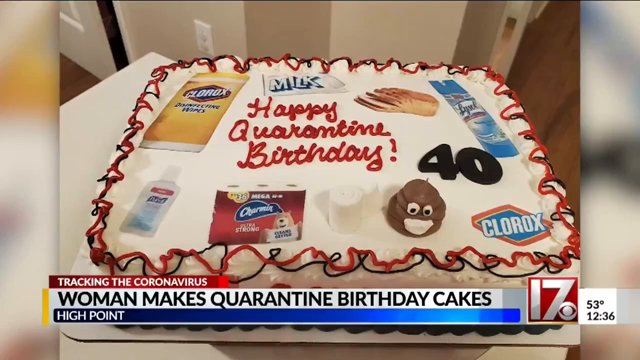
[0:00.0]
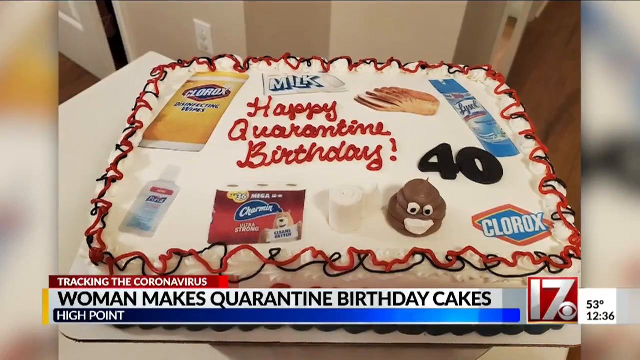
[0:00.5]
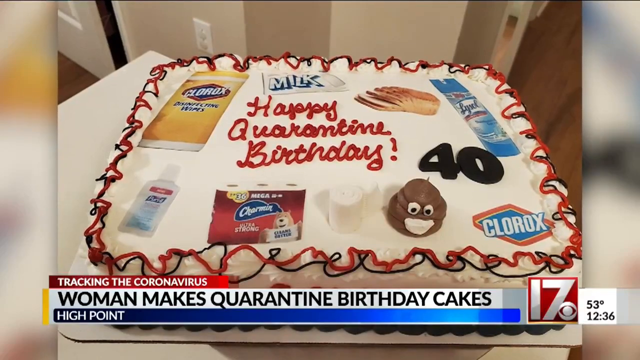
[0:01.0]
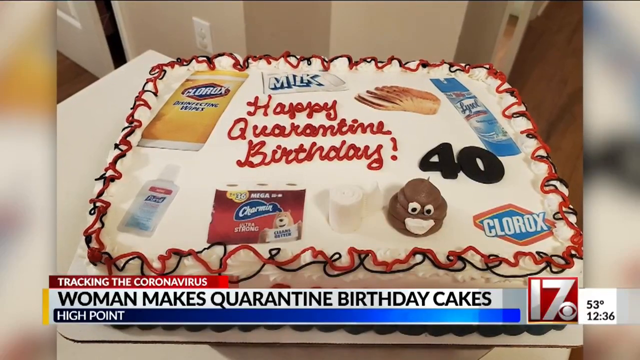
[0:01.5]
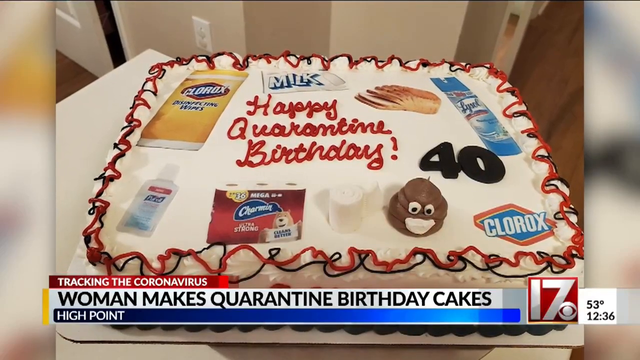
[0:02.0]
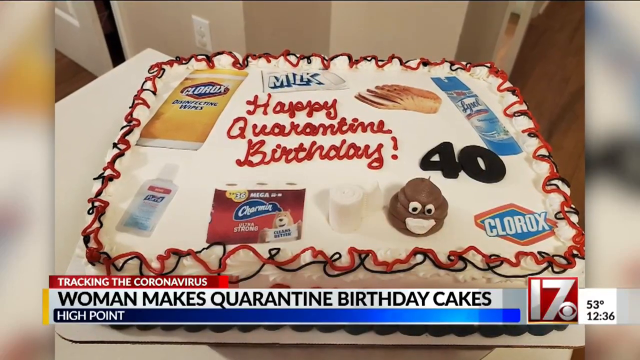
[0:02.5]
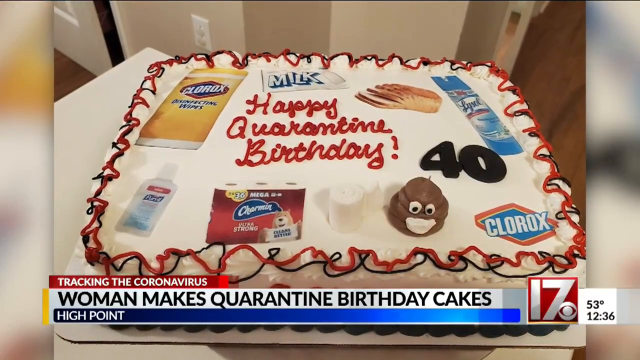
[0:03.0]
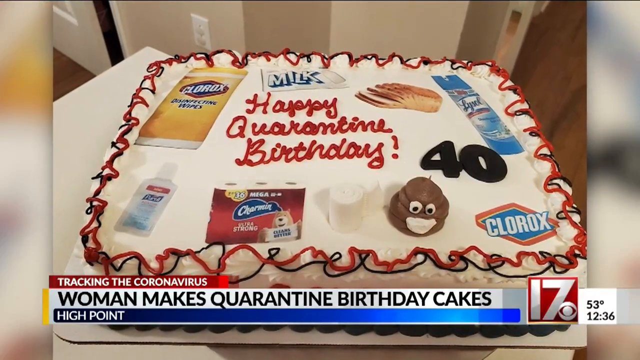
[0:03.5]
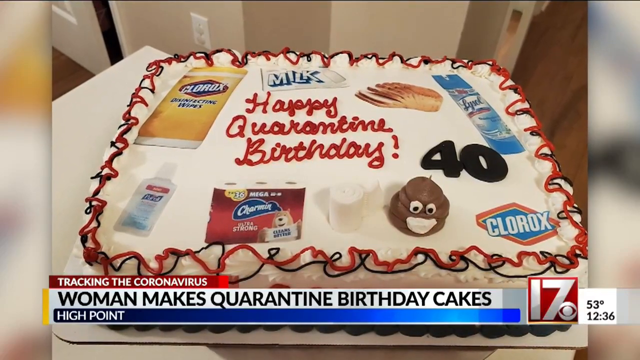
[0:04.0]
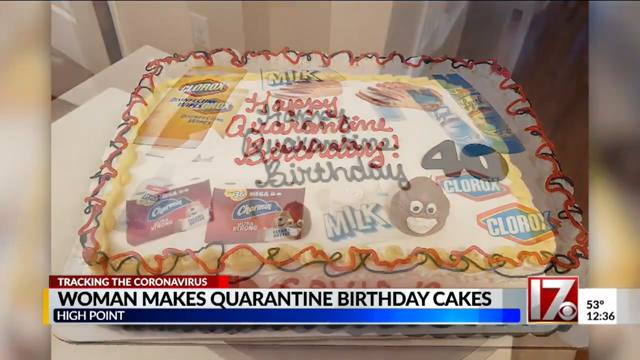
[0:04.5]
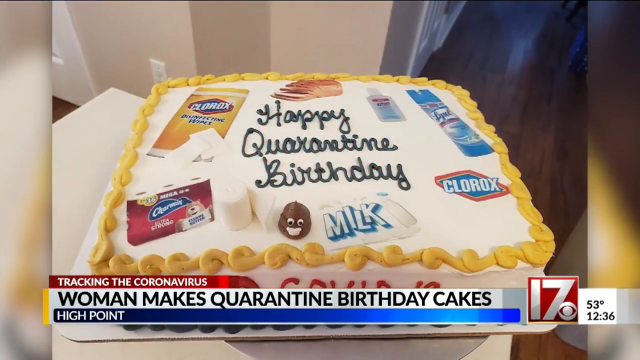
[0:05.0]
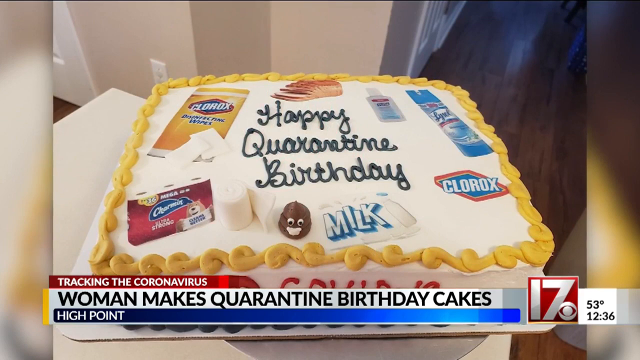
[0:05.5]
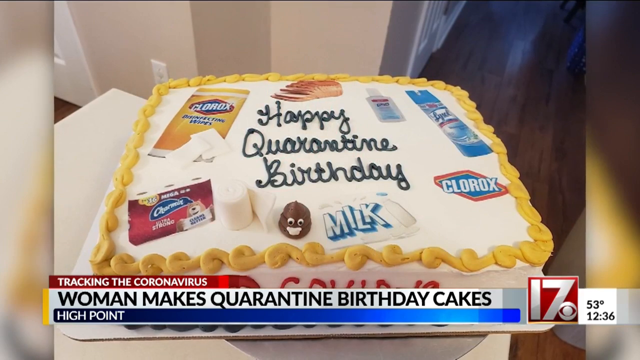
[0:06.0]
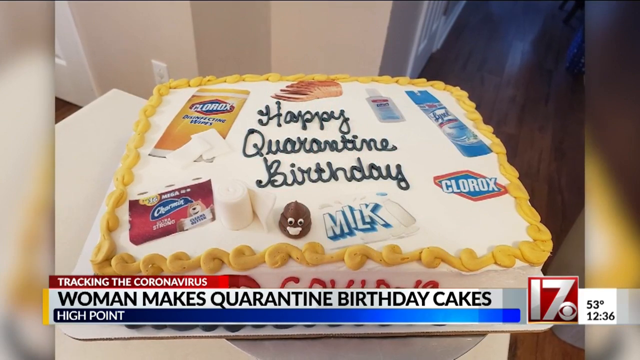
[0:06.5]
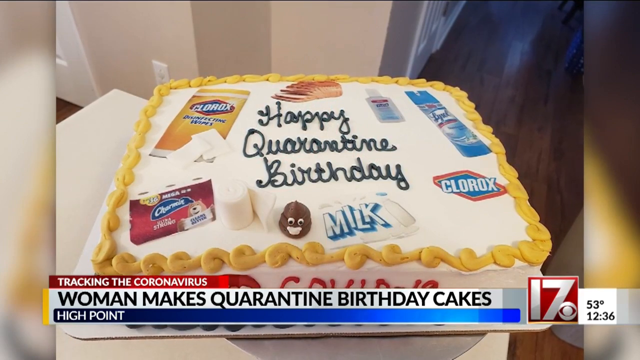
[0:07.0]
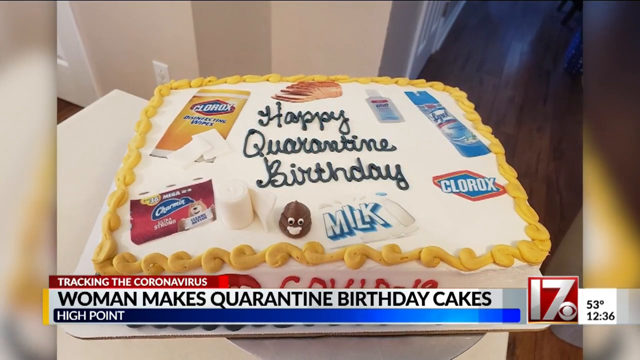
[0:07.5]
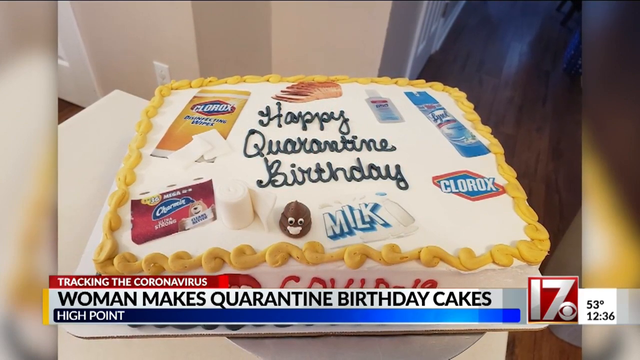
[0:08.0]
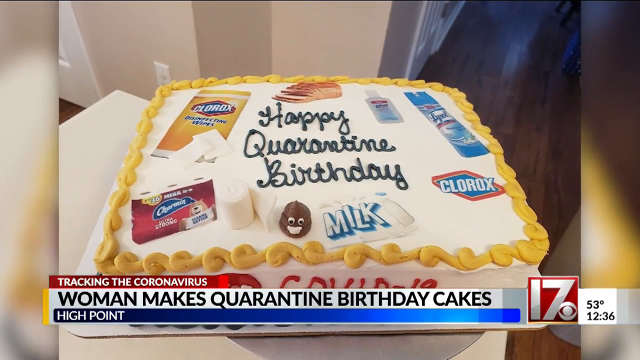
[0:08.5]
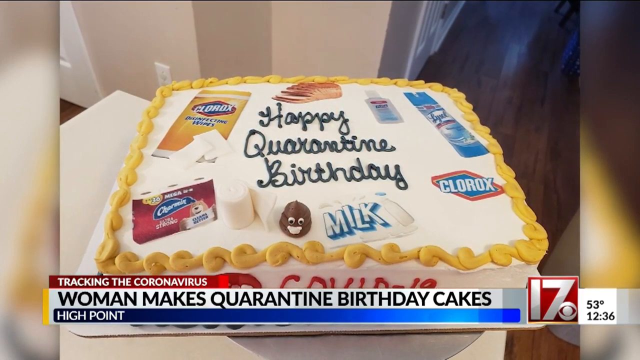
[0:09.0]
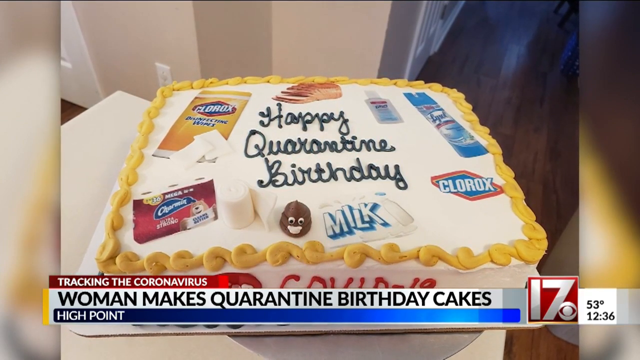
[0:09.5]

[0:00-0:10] A news segment headlined "Woman Makes Quarantine Birthday Cakes" shows a birthday cake with "Happy Quarantine Baby Birthday" written on it in red. The cake is decorated with a Clorox sign, Charmin toilet paper, Purel, Clorox wipes and Lysol spray, as well as regular items like milk and bread. The quality of the decorations is fairly average. The segment is on tracking the coronavirus. The view then flips to the same cake from a different angle. The broadcast is on Channel 17 News, High Point, and the CBS channel shows a temperature of 53 degrees and a time of 12:36 p.m. The video appears to have been made during COVID-19. When the second cake picture appears, its writing is in blue, and this second cake also includes a reference to COVID-19 on the side.